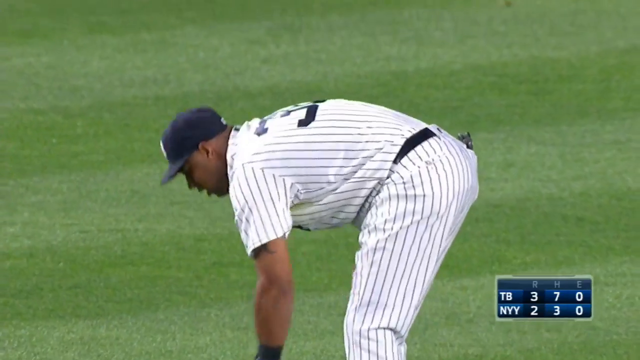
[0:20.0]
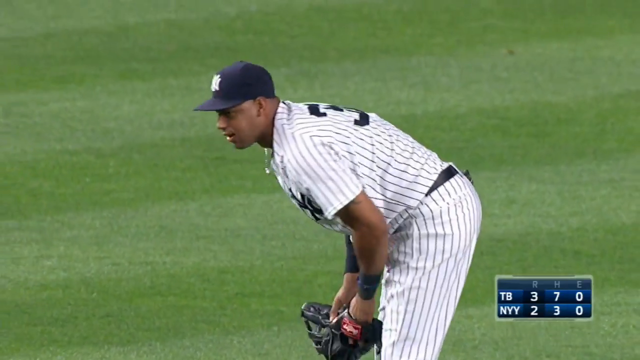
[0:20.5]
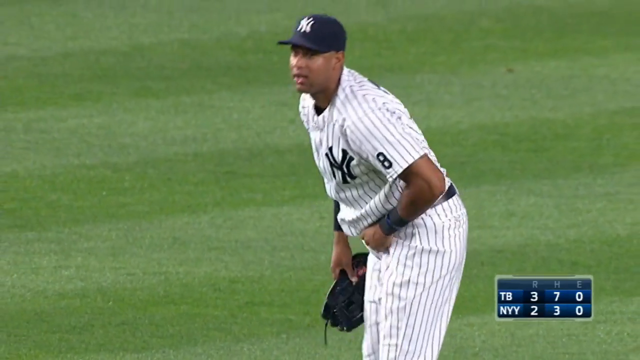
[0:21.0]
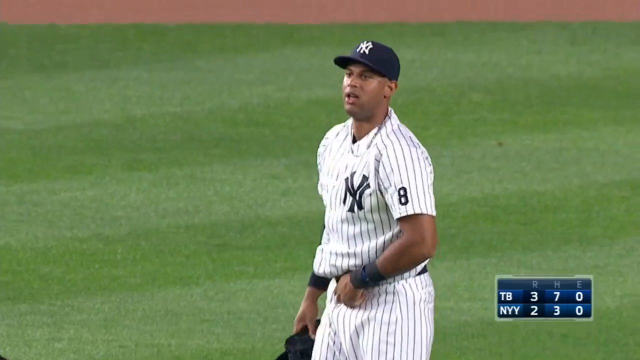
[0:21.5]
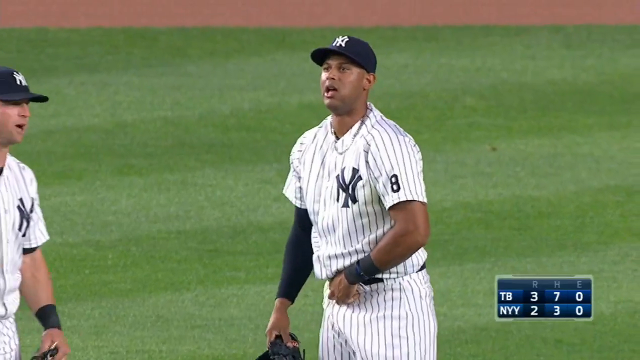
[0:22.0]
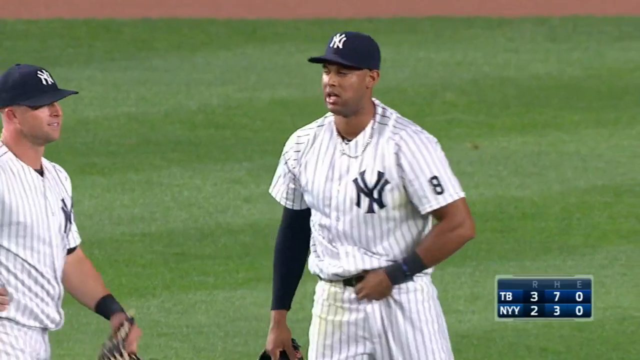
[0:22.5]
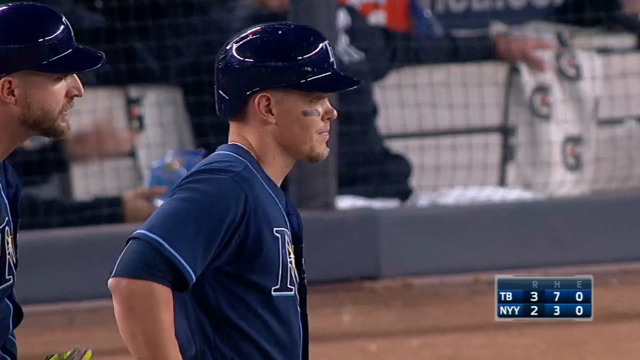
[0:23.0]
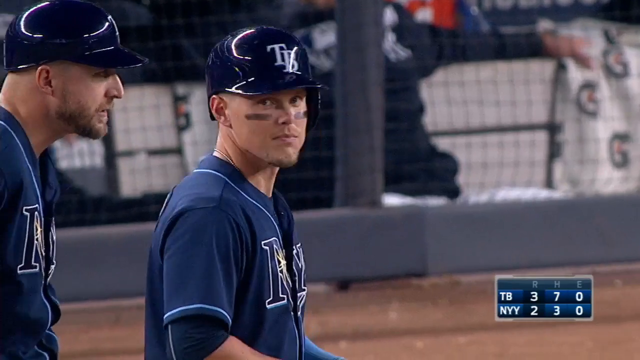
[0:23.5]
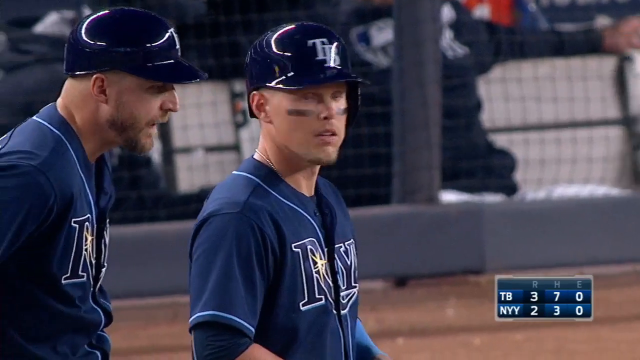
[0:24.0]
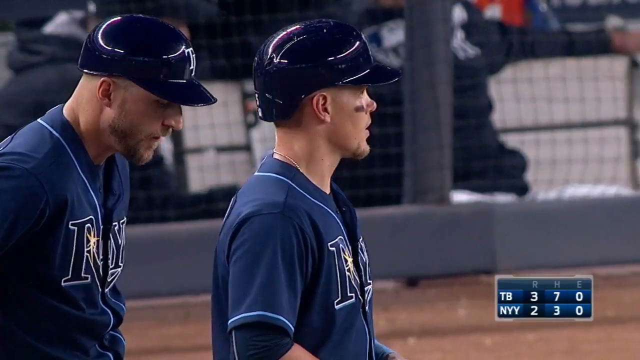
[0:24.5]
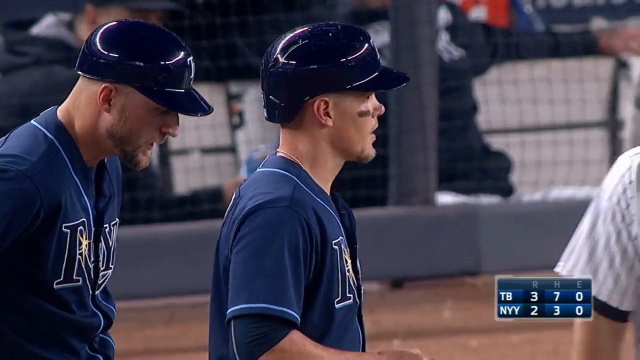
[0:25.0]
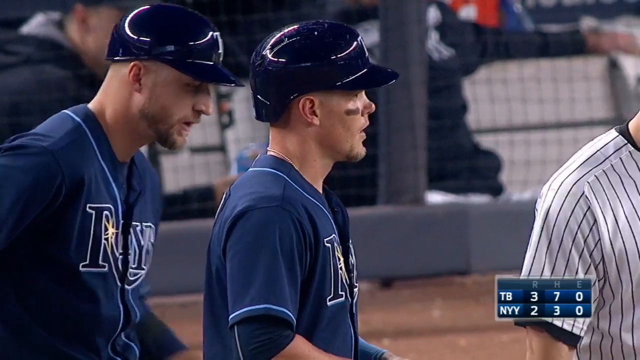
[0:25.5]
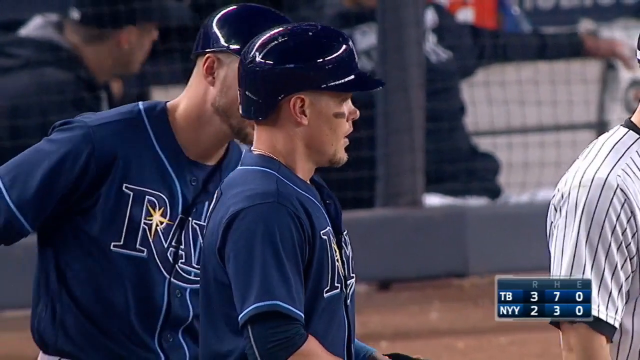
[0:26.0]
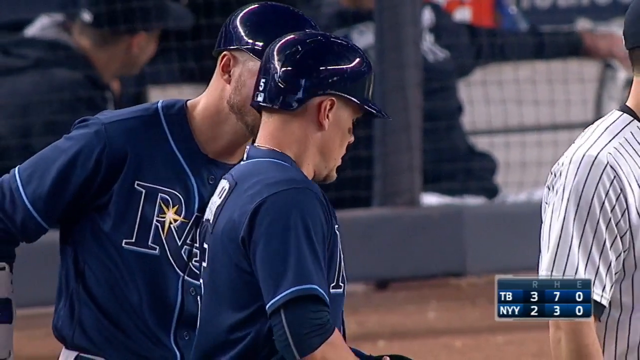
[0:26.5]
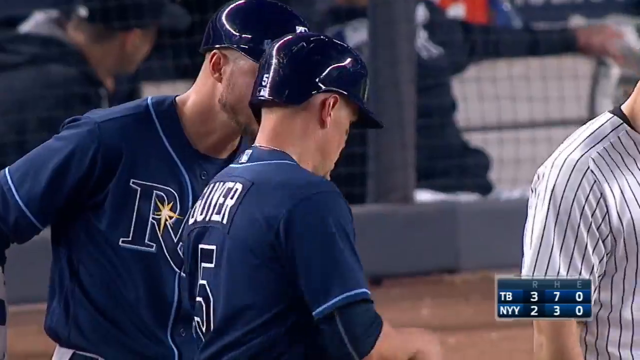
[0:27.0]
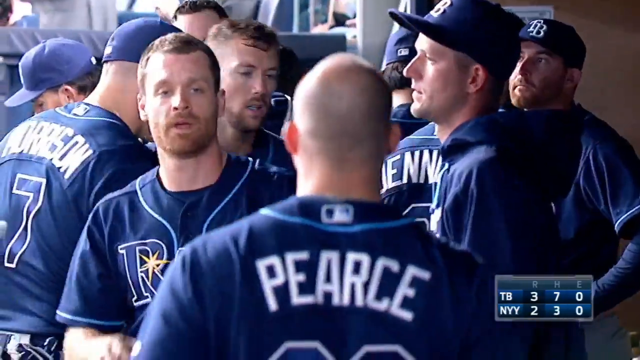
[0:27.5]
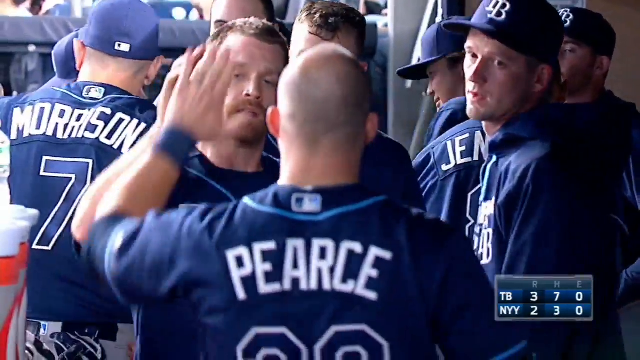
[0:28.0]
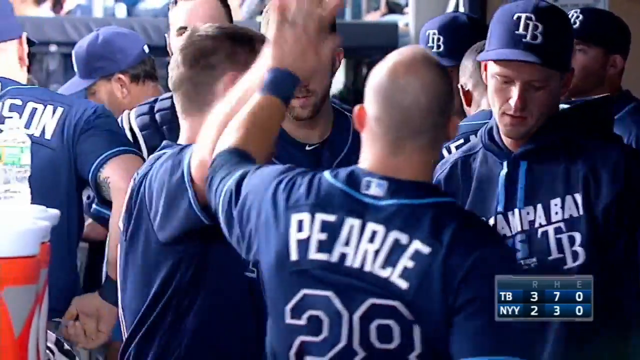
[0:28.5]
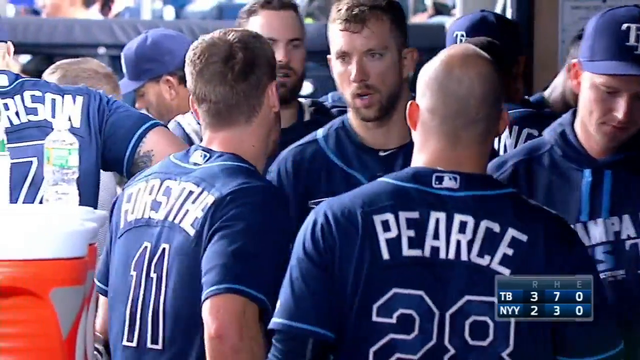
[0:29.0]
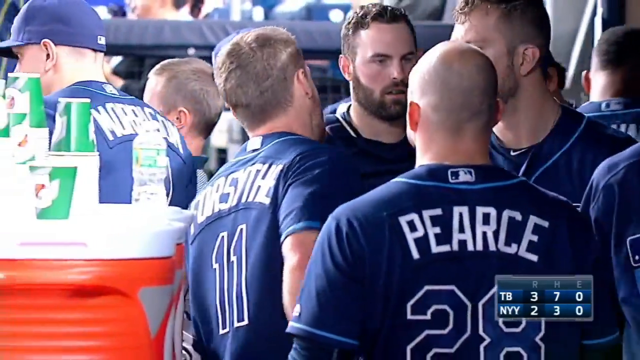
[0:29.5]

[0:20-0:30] A man is bending down in what seems to be a baseball field. He has tan skin and wears a dark baseball hat and a shirt and pants with vertical black stripes. At the bottom right is a scoreboard with the teams TB and NYY. The man straightens up with one arm tucked near his stomach. When he stands up straight, a logo reading "NY" is visible on the front of his shirt, and his hat has the same NY logo. He adjusts his belt with his left hand. Another man wearing the same attire appears on the left side of the screen. The shot switches to two men wearing helmets and navy blue shirts, one in front and another behind him. The man in front has black paint on his right cheek; the man behind him has no paint on his face. The man in the back seems to be talking to the man in front and hands him something. The shot changes to a group of other men in navy blue shirts, some wearing baseball hats with the word "TB" on them. Two of the men in front high-five.